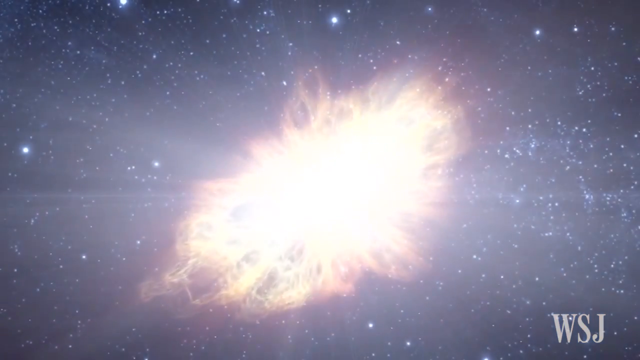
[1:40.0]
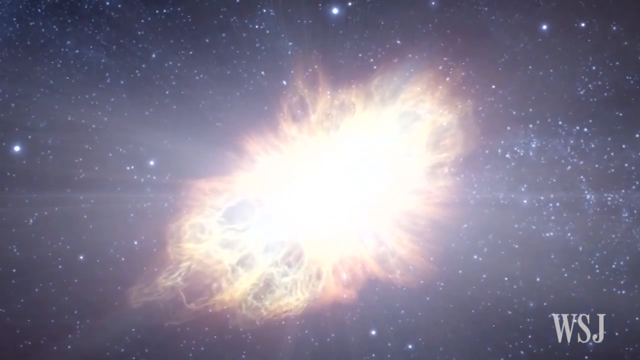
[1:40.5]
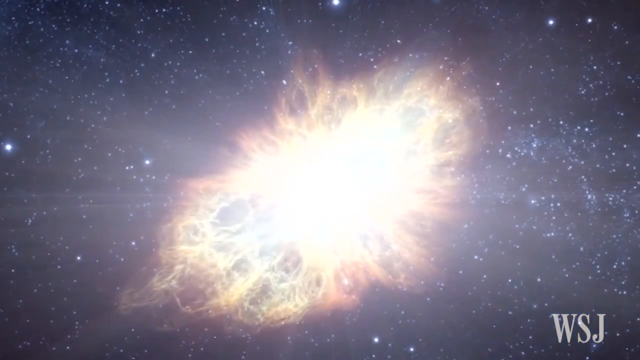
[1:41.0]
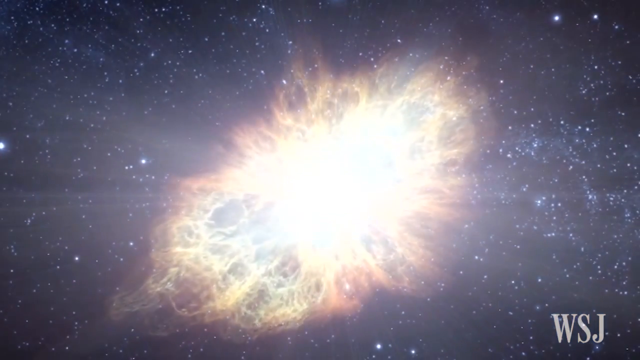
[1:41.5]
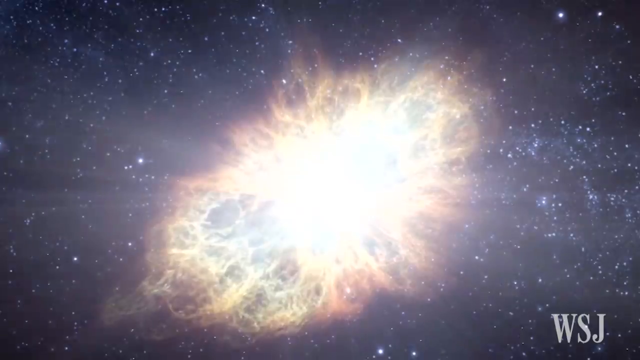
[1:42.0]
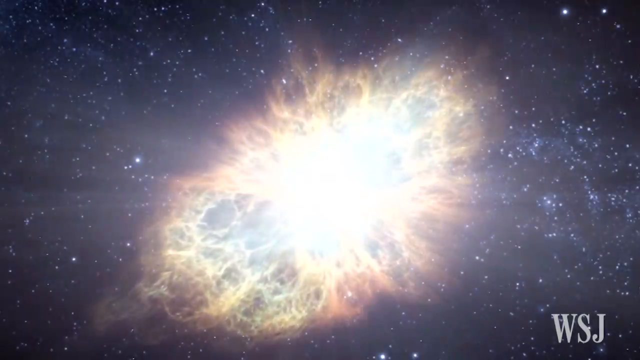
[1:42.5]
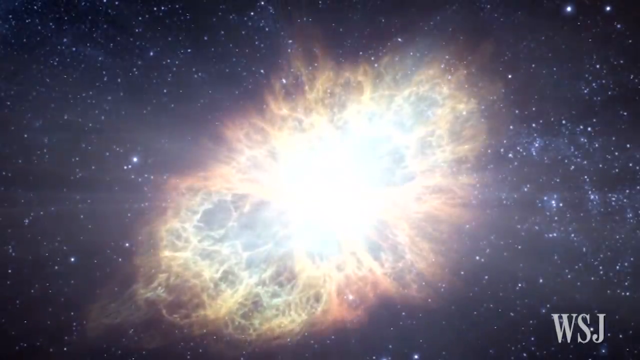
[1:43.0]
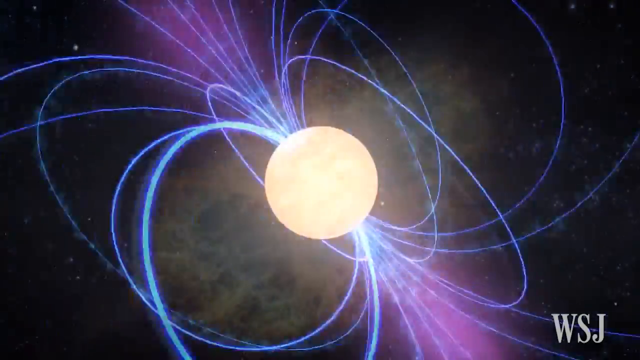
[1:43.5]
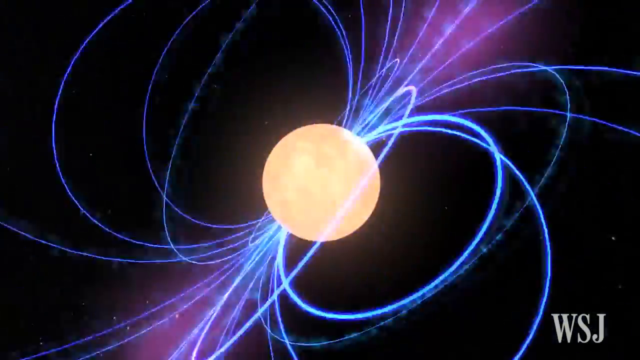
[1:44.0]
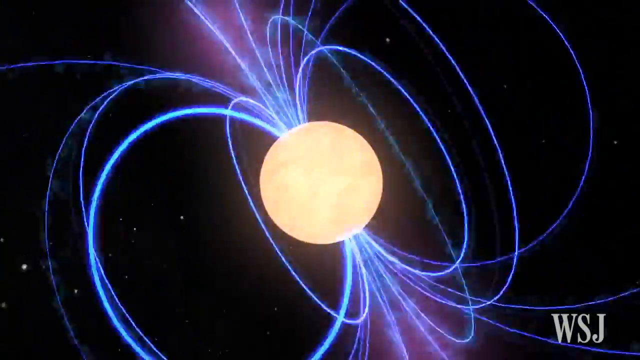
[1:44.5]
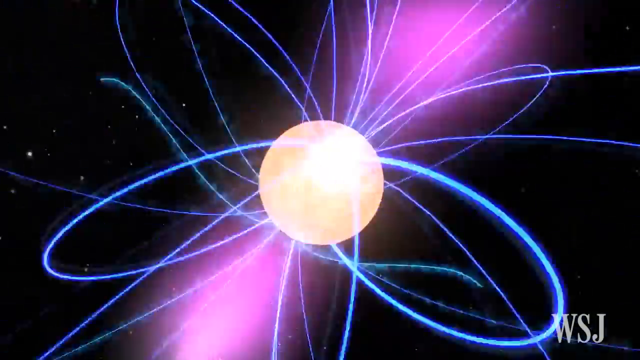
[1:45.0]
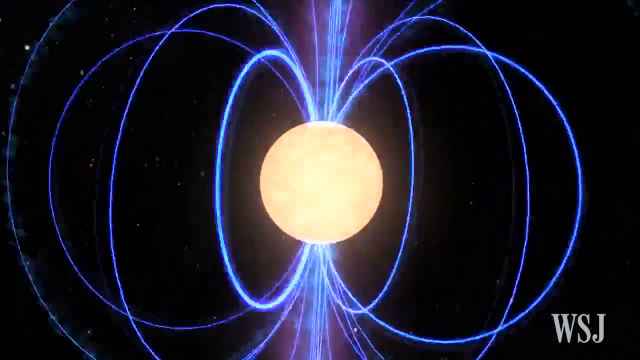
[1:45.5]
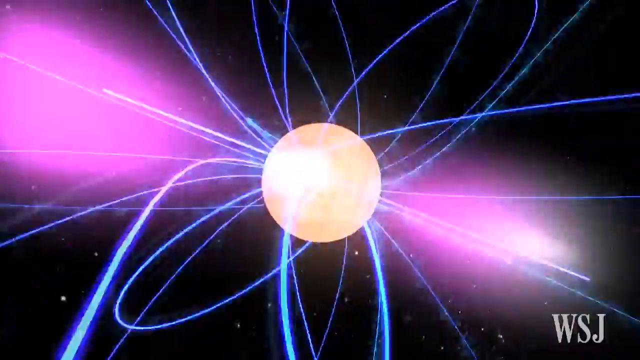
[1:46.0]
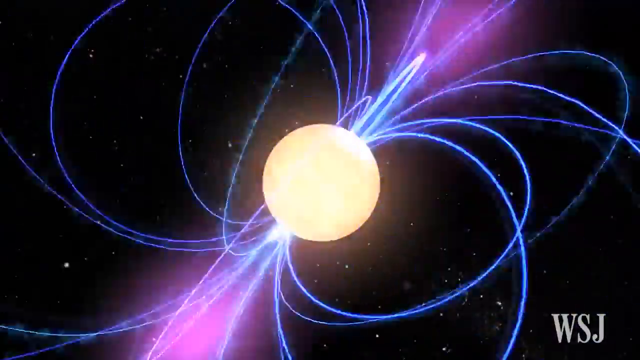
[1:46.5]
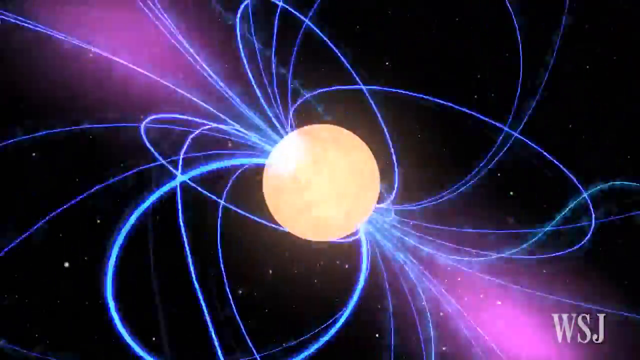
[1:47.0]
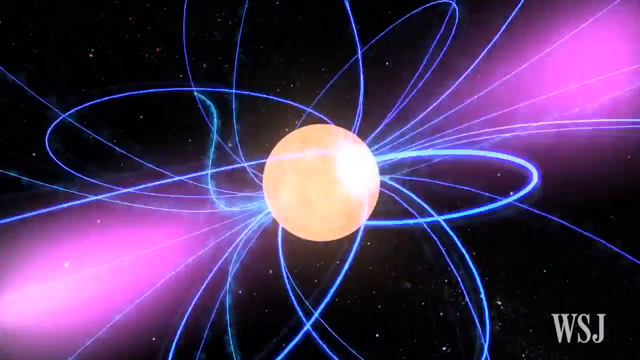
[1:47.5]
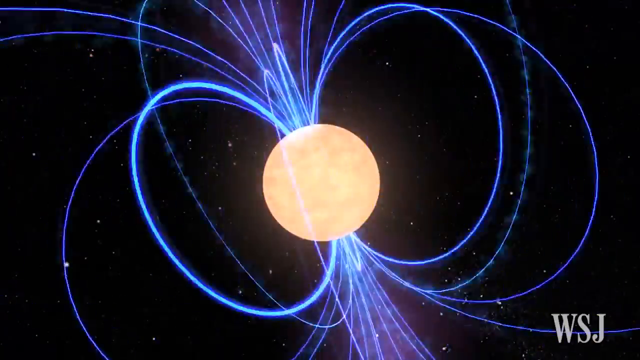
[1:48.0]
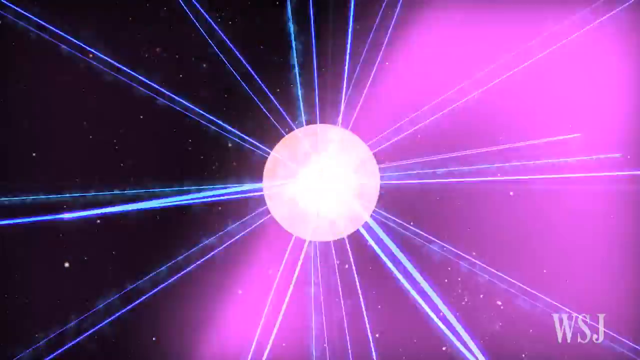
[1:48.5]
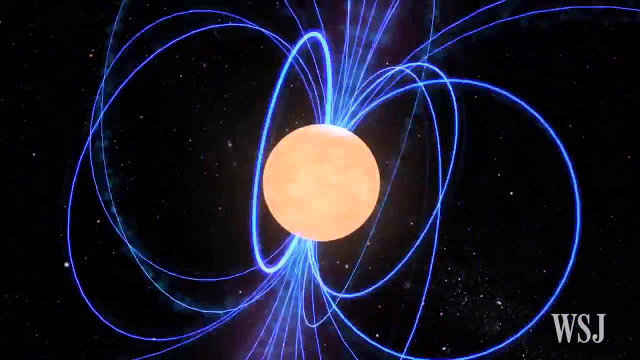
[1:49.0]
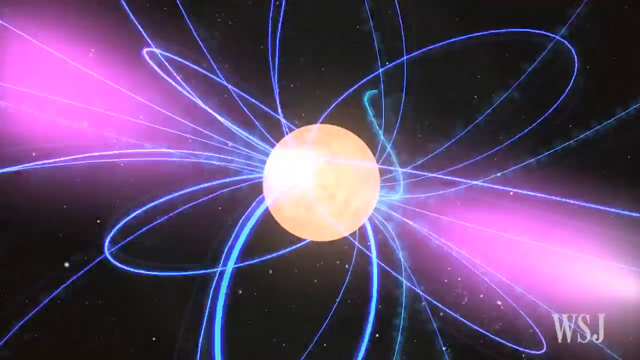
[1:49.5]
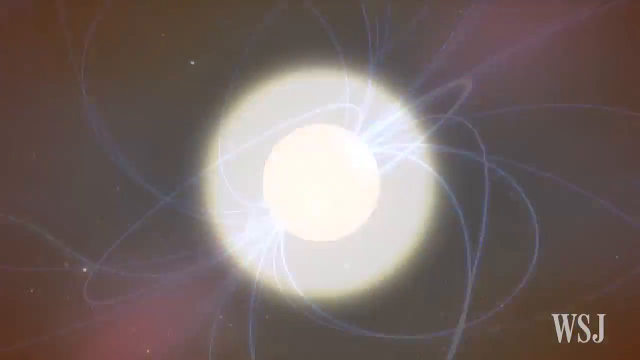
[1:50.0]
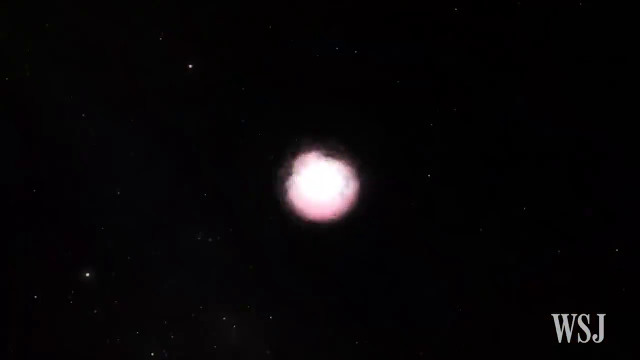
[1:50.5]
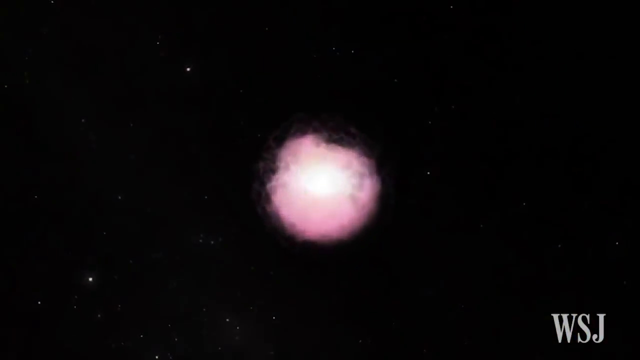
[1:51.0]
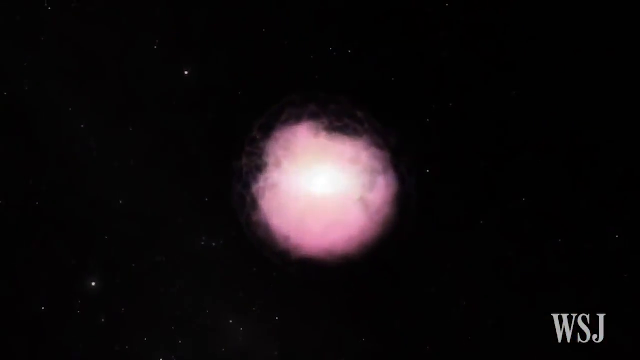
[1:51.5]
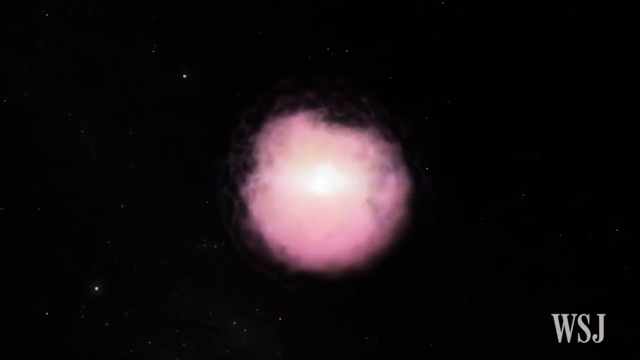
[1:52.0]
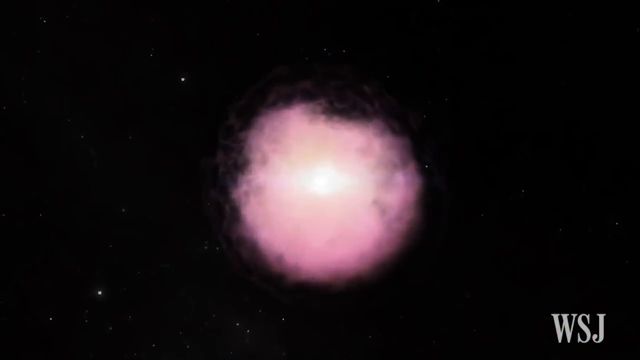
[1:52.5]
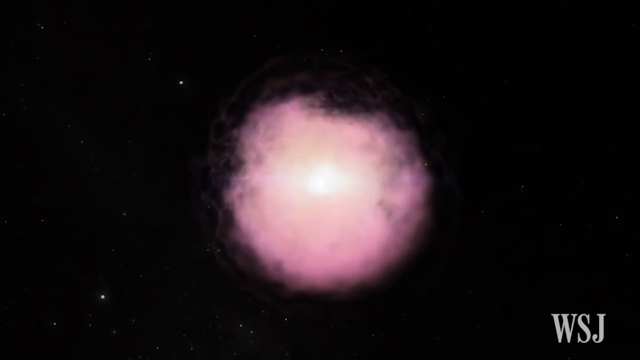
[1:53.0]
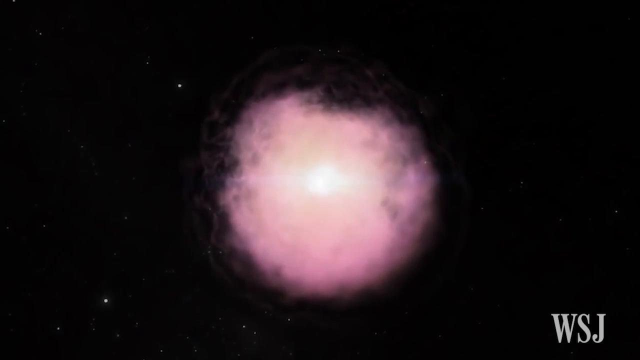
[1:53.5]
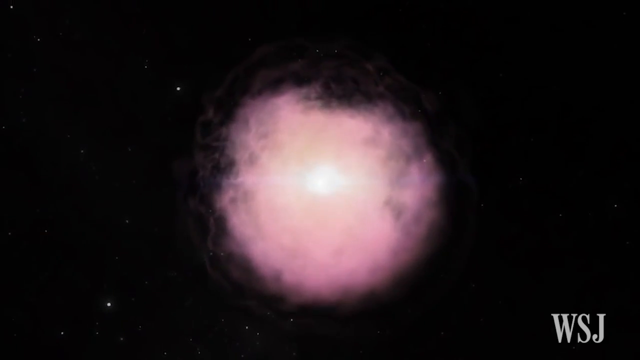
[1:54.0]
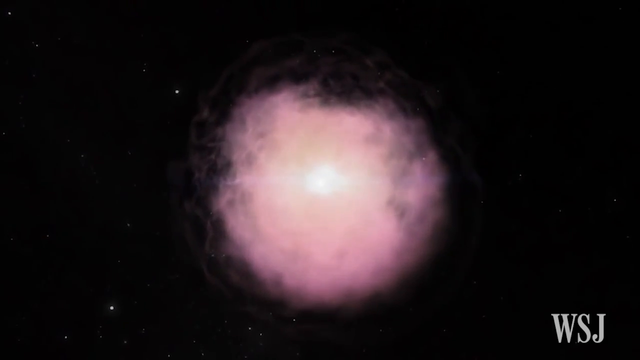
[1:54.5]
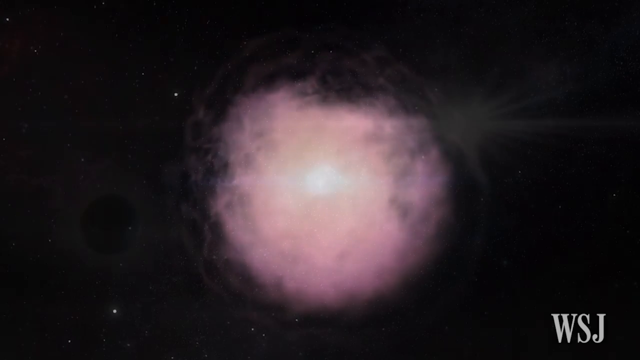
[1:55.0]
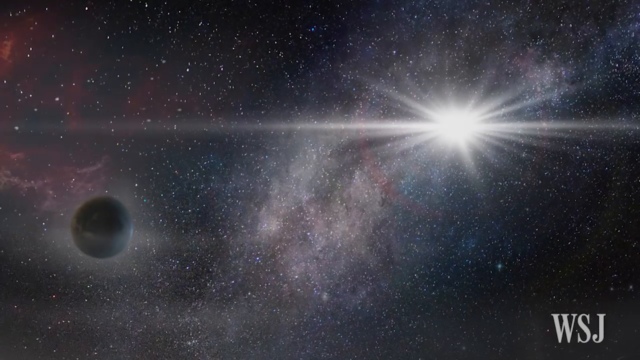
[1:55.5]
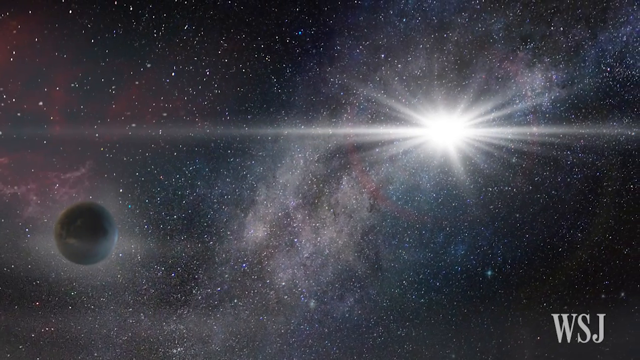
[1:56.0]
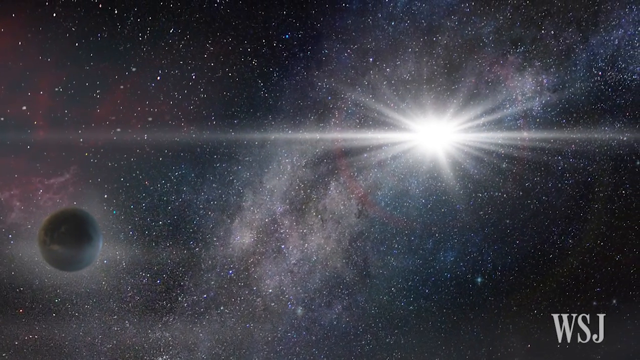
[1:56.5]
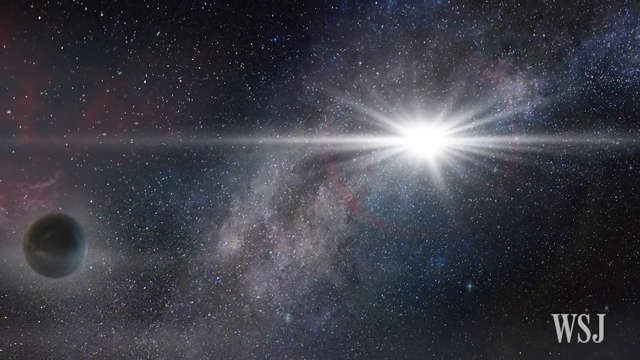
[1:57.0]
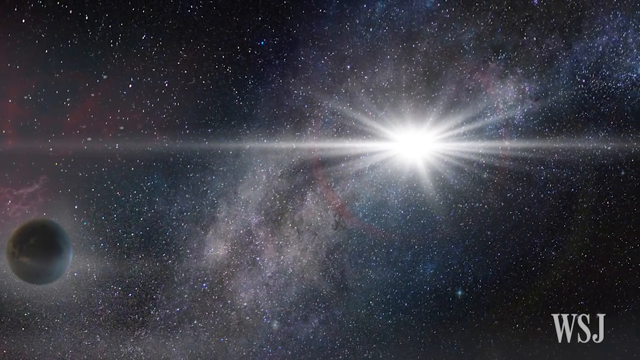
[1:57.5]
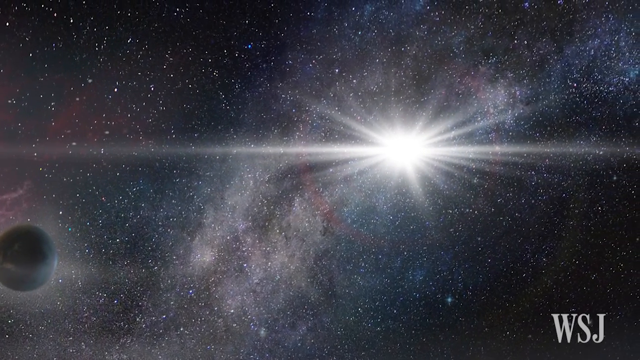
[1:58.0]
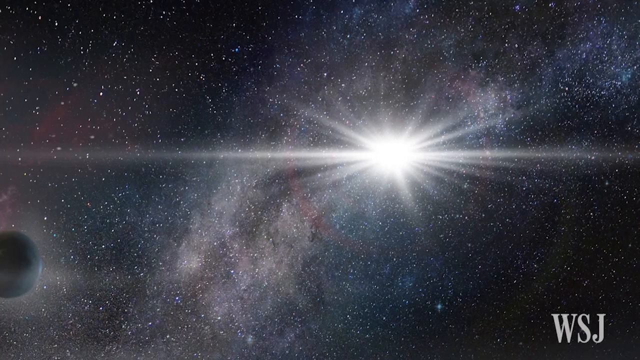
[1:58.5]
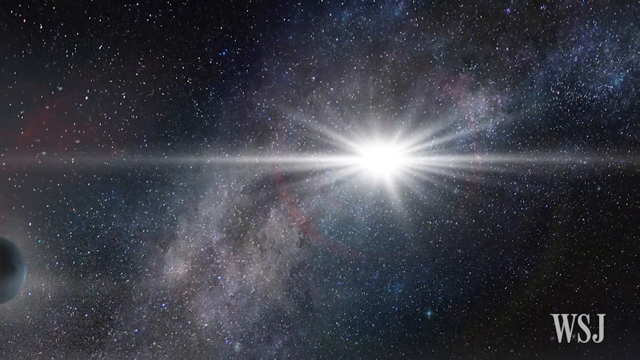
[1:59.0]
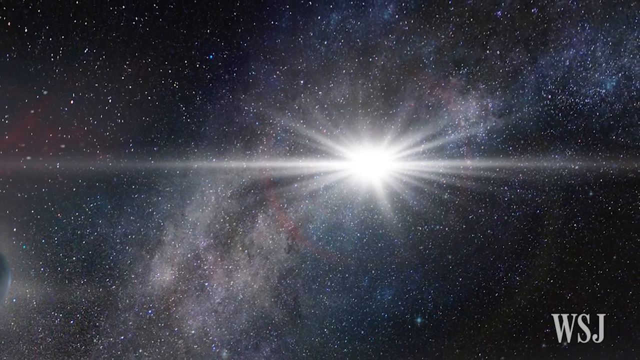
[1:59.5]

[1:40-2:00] Another exploding star appears. Then a star rotates on its axis with what seems to be a magnetic field projecting from it; its north and south poles are clearly visible. A star fades, and the view returns to the image of one star standing out amongst many thousands with a planet nearby.